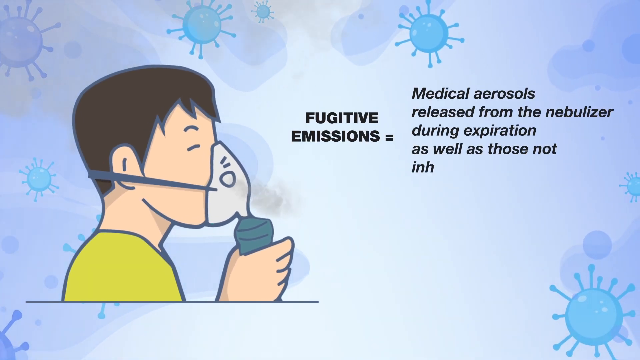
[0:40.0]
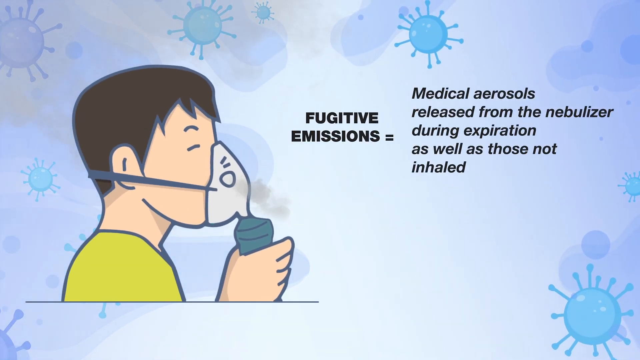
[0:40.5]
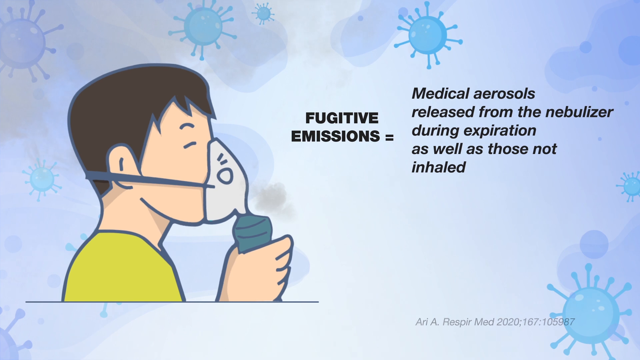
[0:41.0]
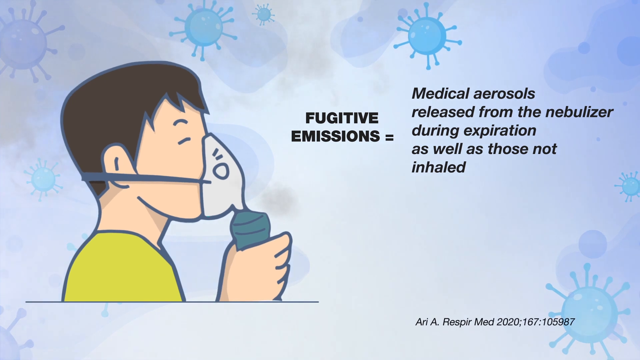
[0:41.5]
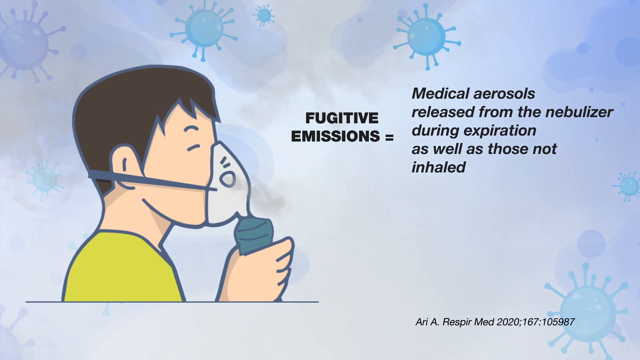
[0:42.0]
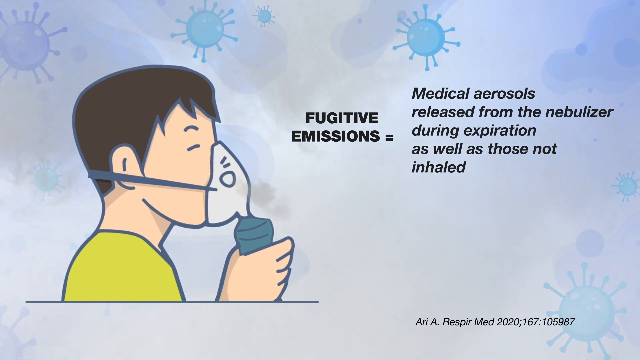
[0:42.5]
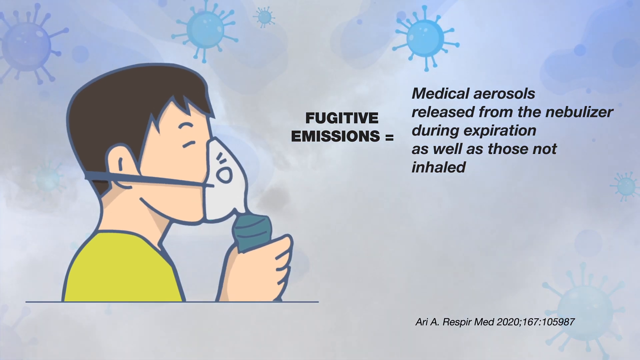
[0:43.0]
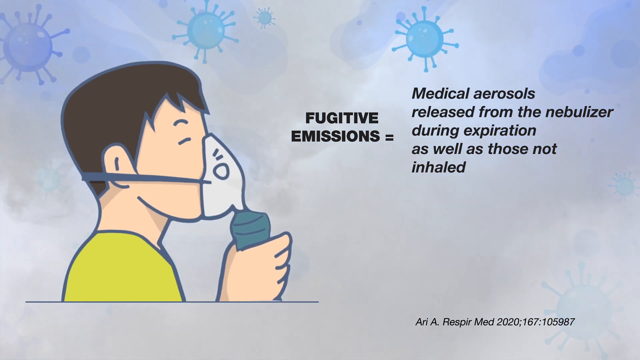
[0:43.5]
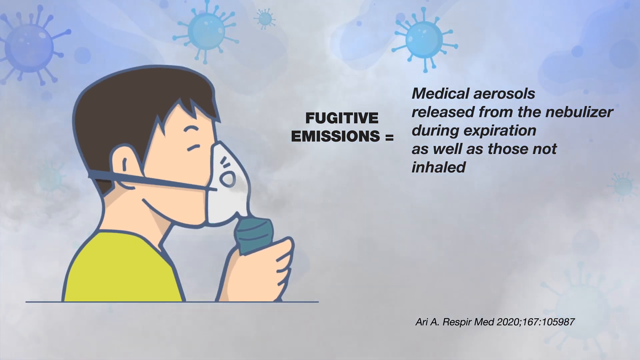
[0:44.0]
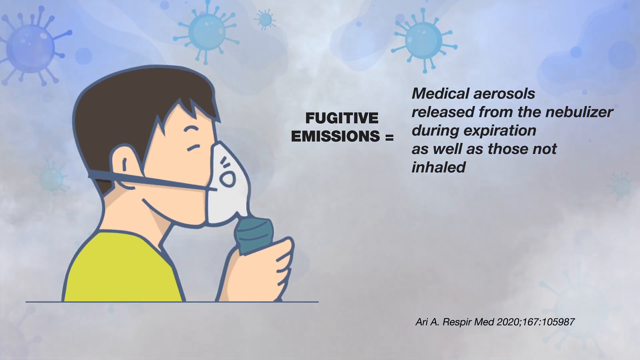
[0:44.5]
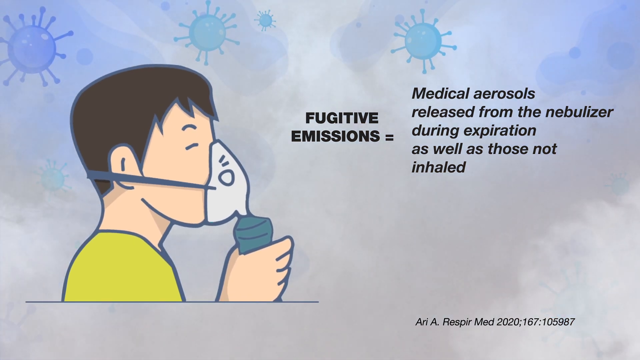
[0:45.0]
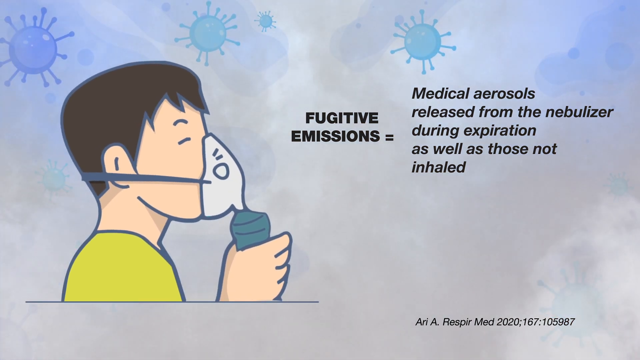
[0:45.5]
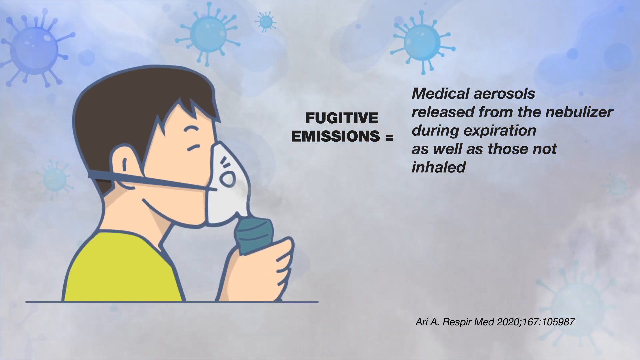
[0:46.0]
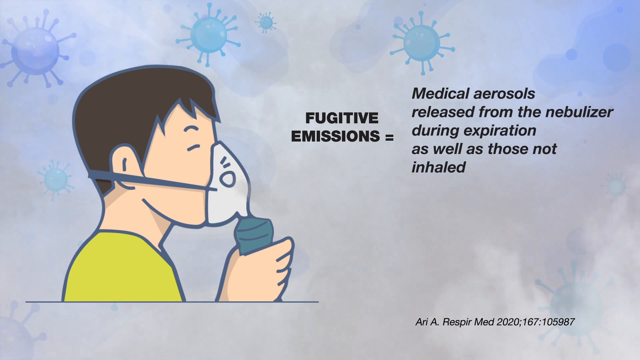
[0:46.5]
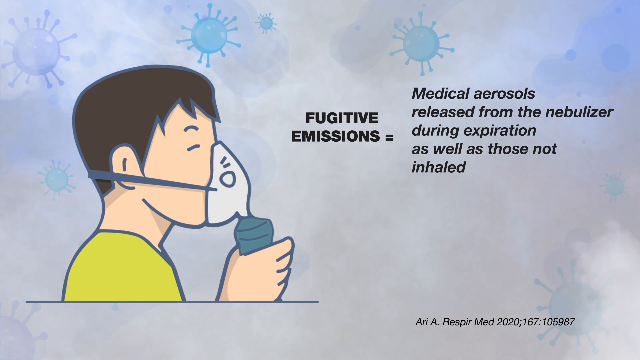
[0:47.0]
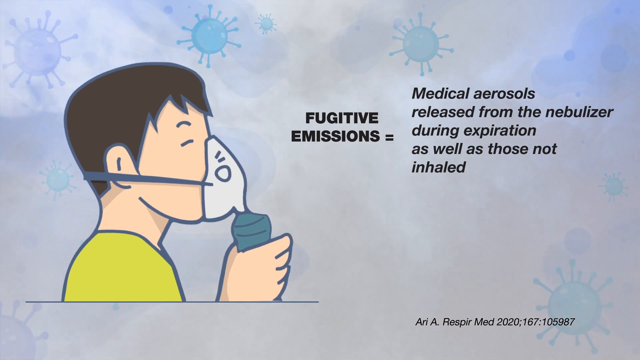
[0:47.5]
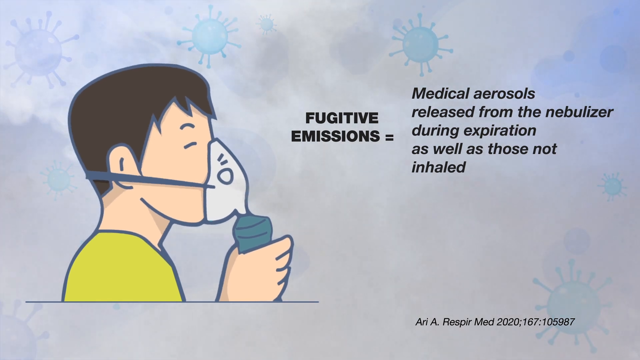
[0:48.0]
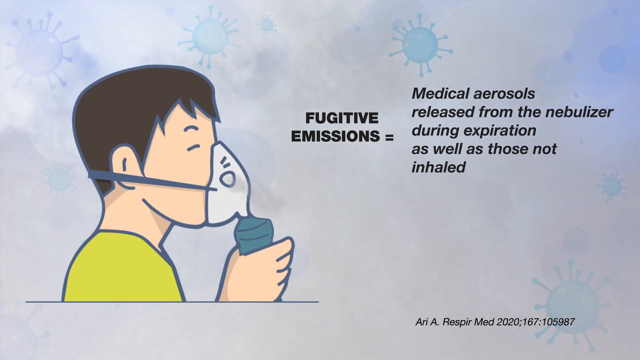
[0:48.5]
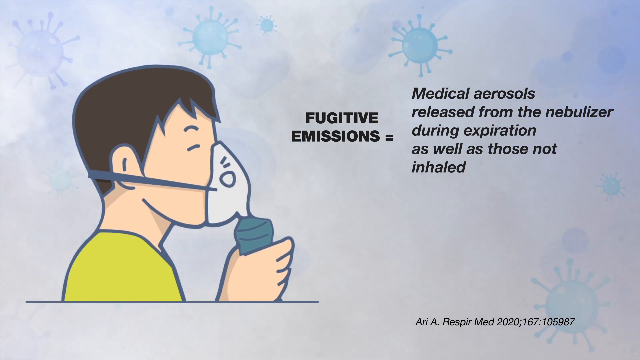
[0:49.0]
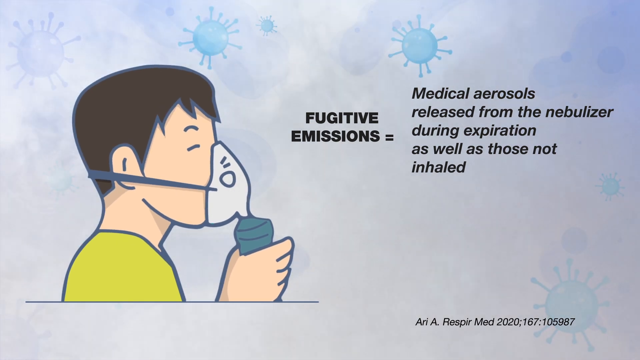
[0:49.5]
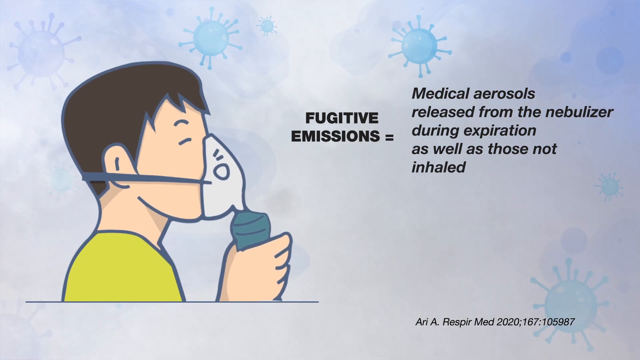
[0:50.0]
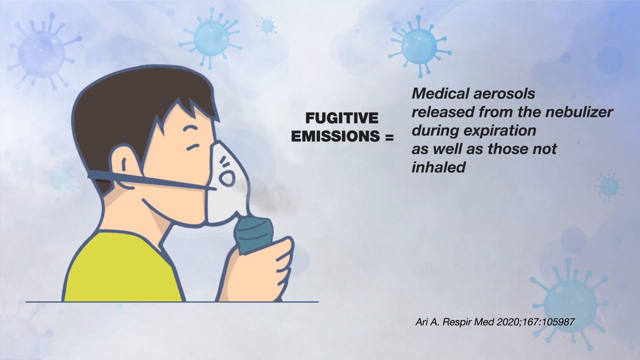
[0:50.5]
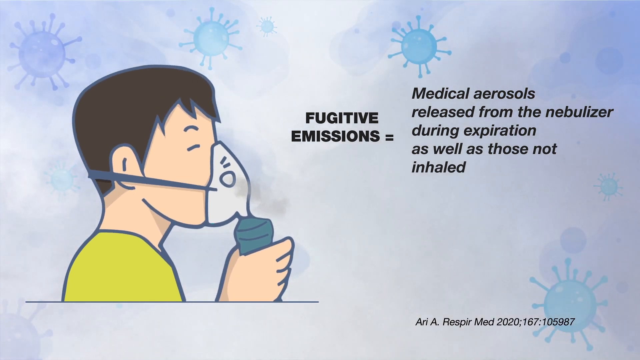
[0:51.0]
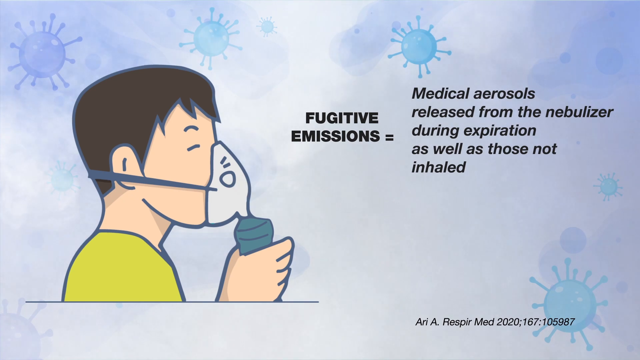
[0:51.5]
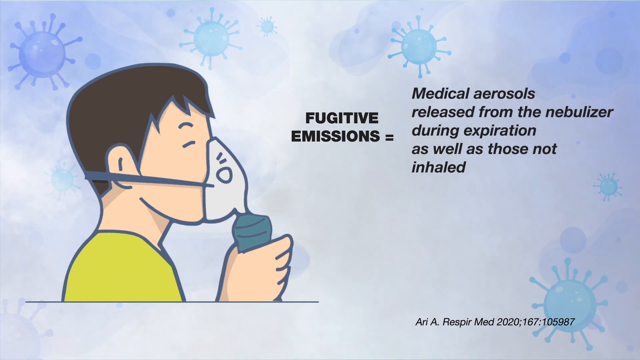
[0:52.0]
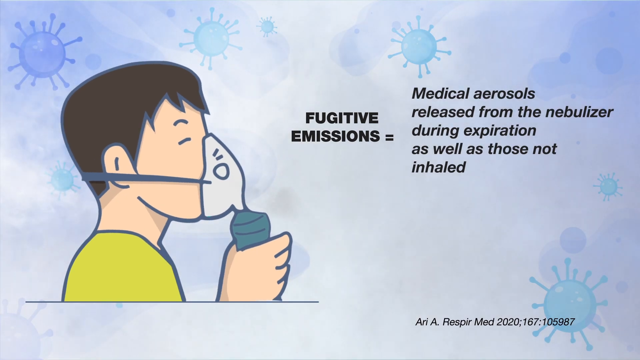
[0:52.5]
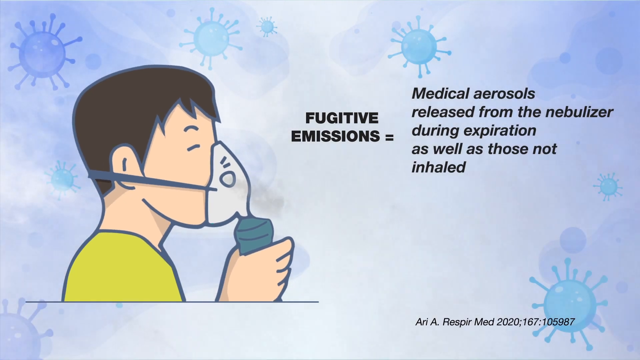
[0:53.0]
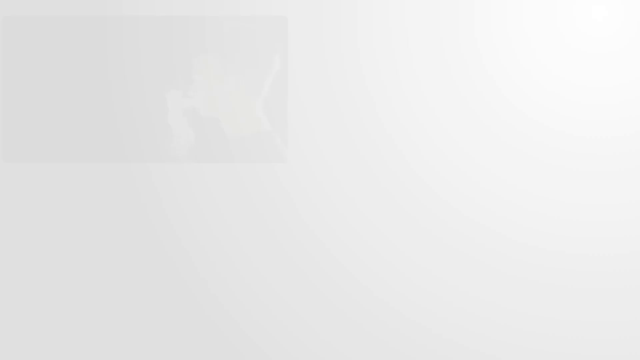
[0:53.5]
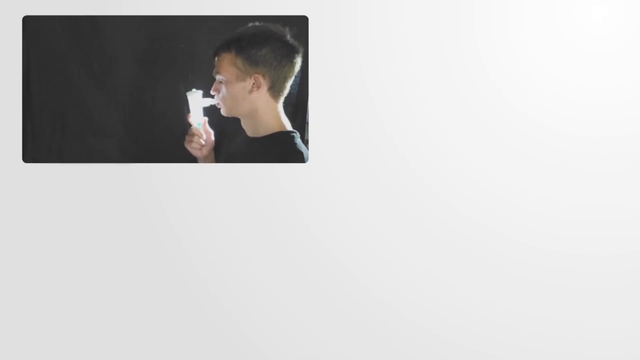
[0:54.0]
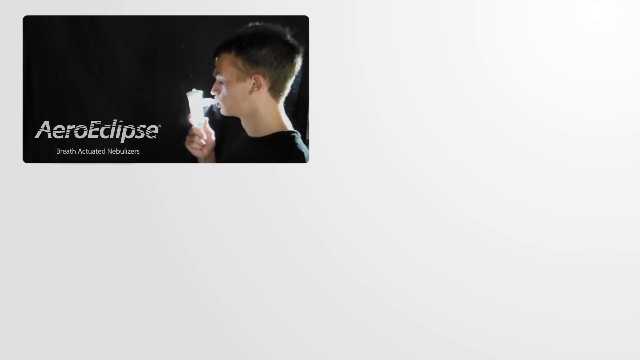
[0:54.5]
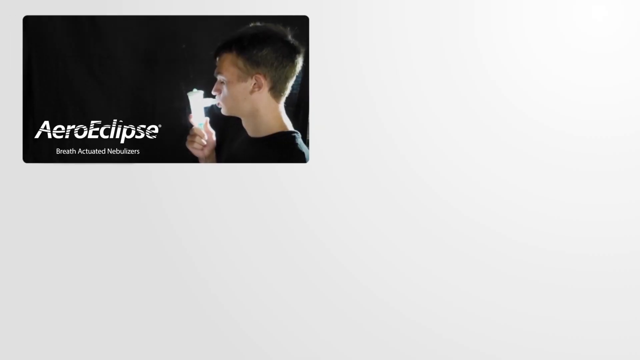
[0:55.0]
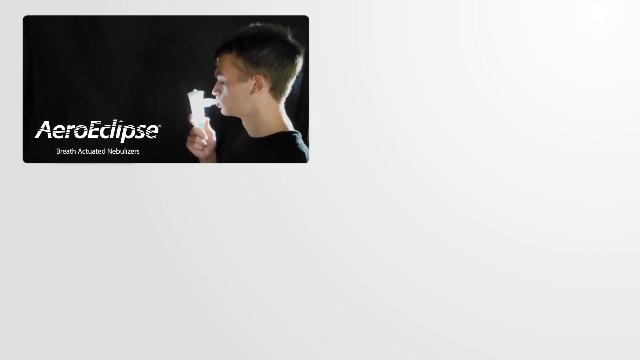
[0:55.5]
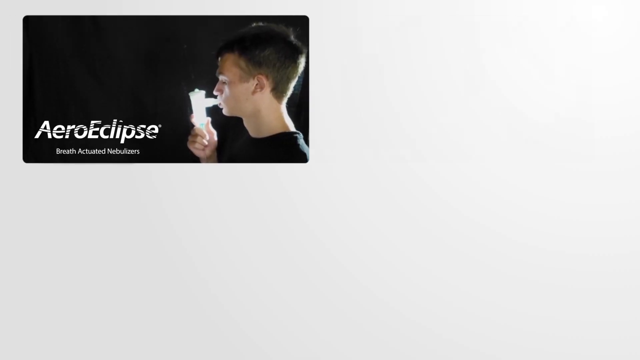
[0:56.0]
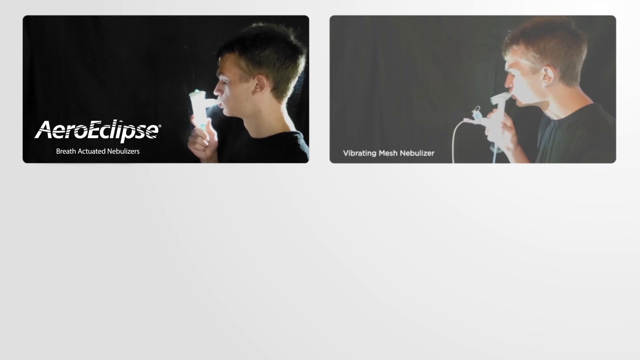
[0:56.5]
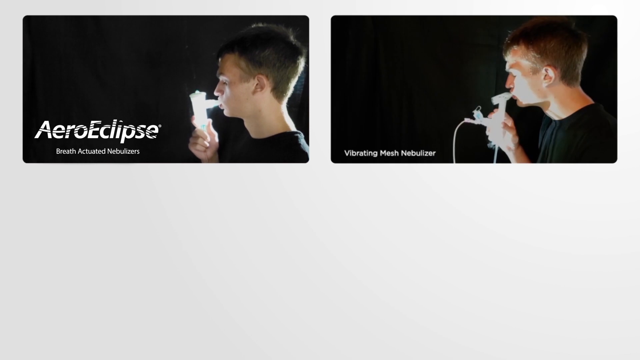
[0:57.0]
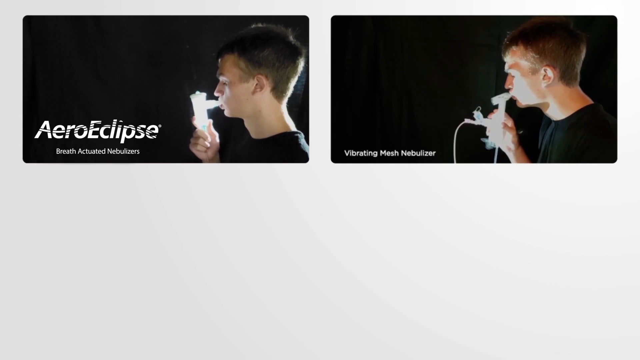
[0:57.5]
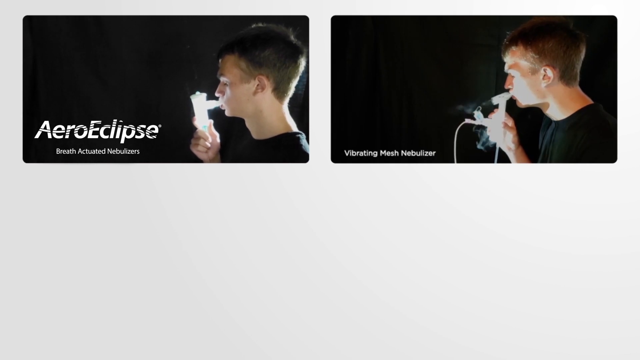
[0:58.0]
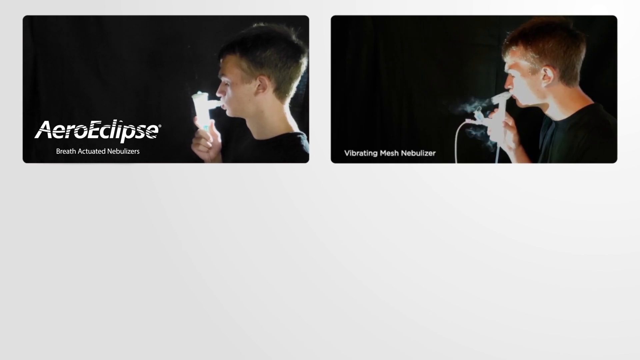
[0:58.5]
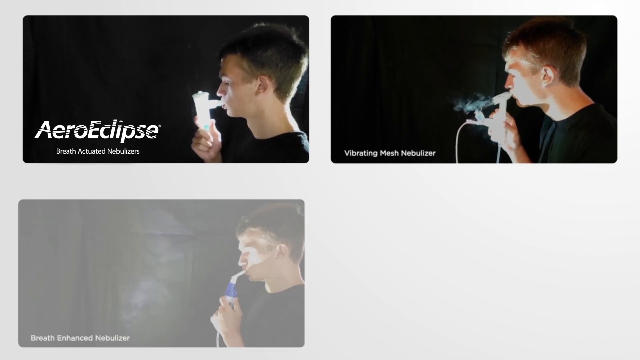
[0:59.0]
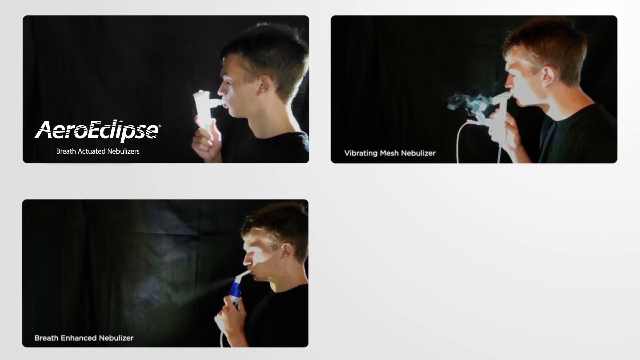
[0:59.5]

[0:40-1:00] The page about fugitive emissions is on screen: "medical aerosols released from the nebulizer during expiration, as well as those not inhaled". A man is shown breathing from a nebulizer. Next, Arrow Eclipse breath actuated nebulizers appear, and the text says "vibrating mesh nebulizer". A man is shown with one. A breath enhanced nebulizer and a standard jet nebulizer are then shown.